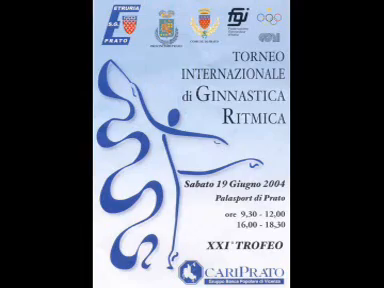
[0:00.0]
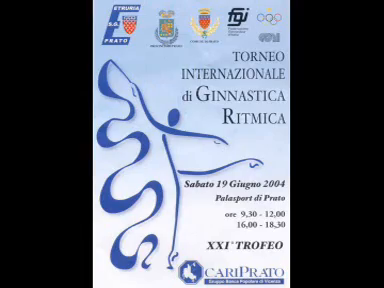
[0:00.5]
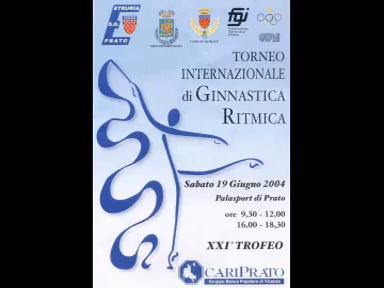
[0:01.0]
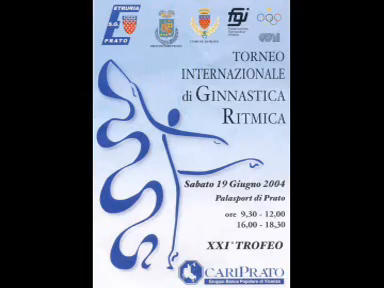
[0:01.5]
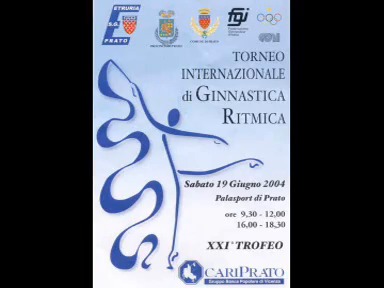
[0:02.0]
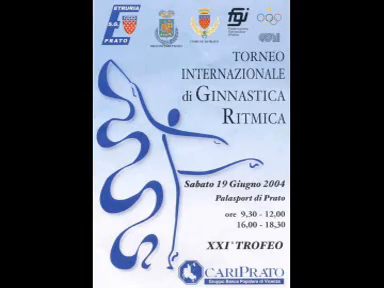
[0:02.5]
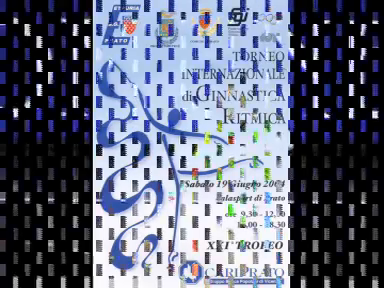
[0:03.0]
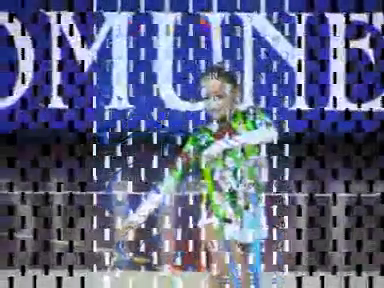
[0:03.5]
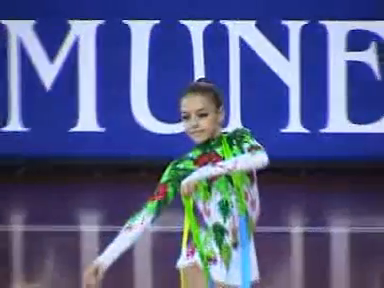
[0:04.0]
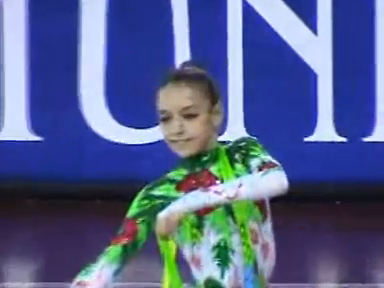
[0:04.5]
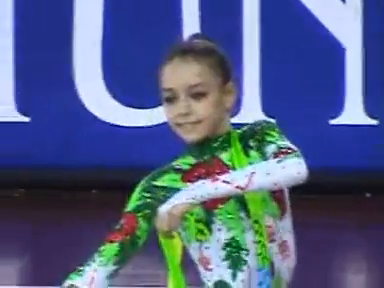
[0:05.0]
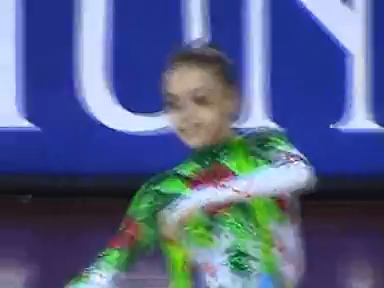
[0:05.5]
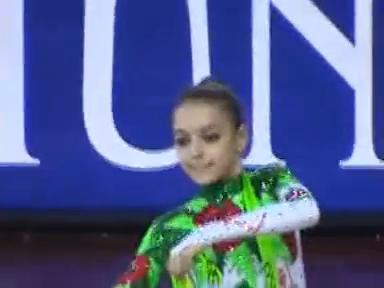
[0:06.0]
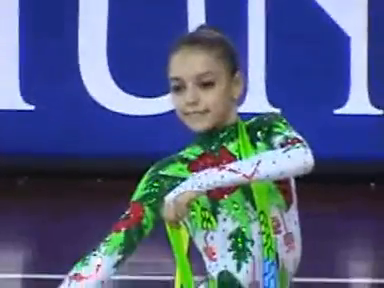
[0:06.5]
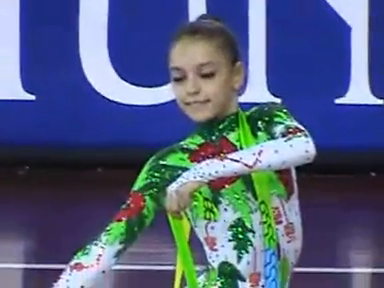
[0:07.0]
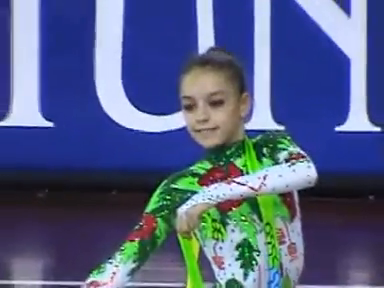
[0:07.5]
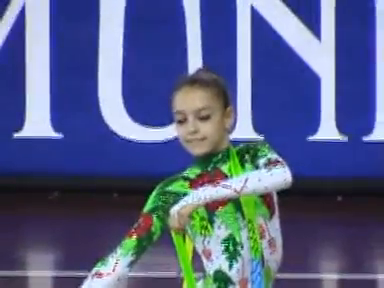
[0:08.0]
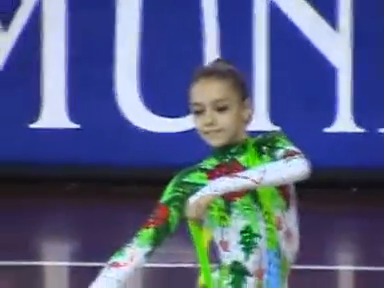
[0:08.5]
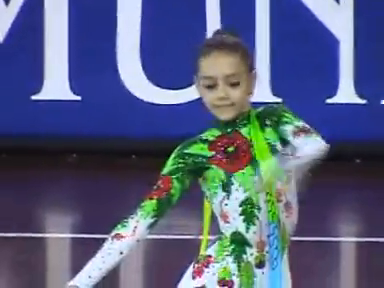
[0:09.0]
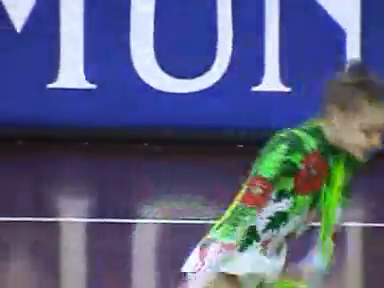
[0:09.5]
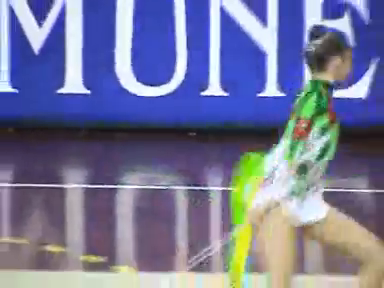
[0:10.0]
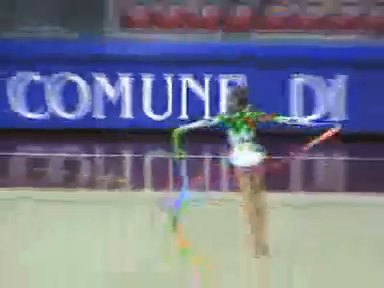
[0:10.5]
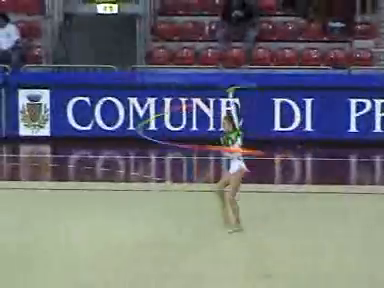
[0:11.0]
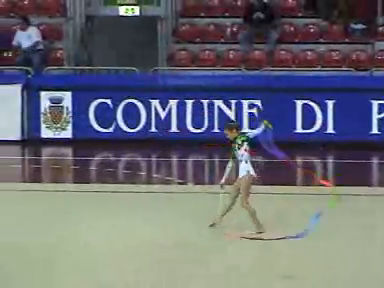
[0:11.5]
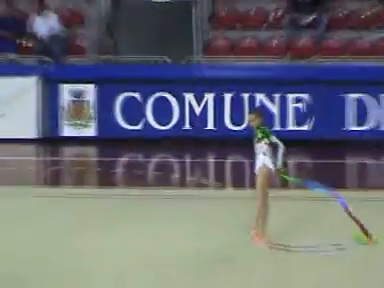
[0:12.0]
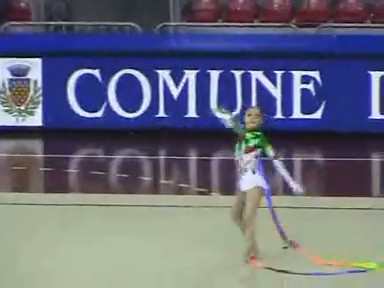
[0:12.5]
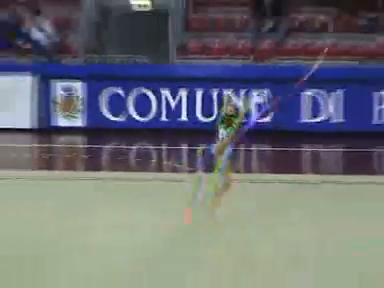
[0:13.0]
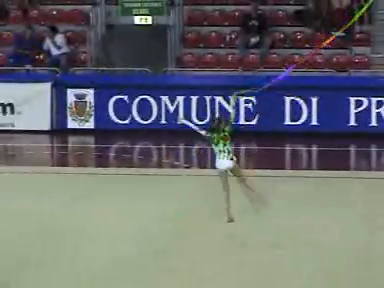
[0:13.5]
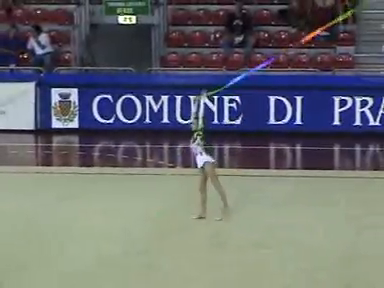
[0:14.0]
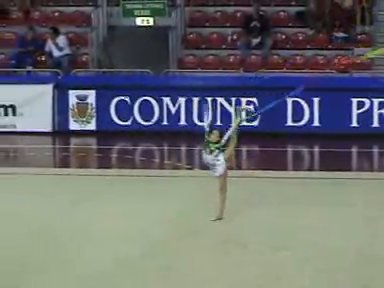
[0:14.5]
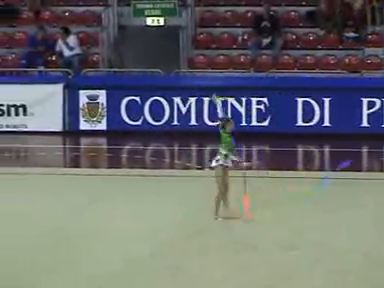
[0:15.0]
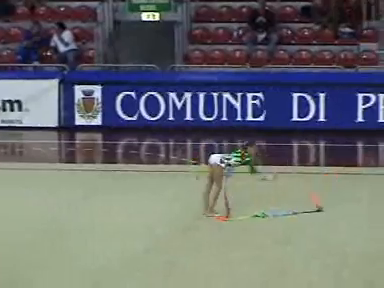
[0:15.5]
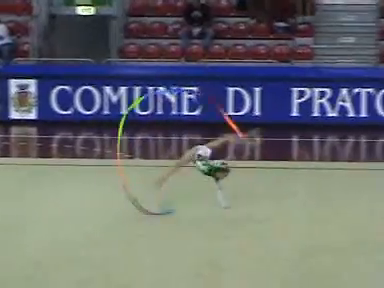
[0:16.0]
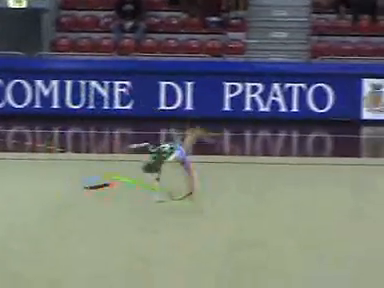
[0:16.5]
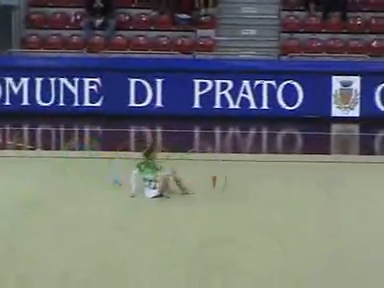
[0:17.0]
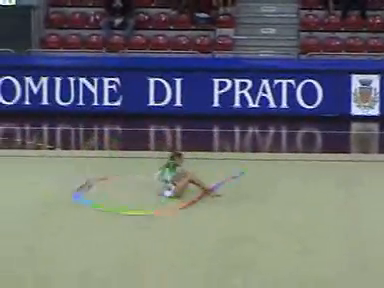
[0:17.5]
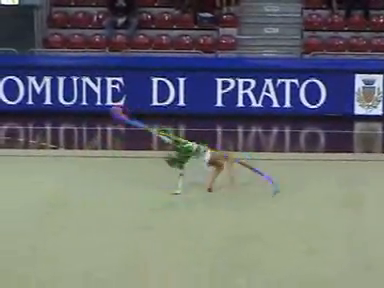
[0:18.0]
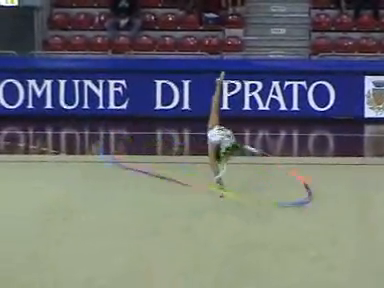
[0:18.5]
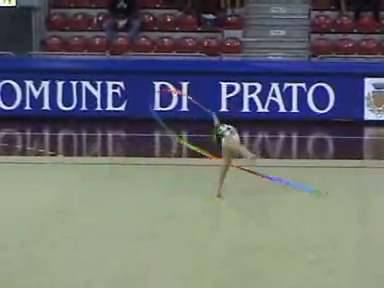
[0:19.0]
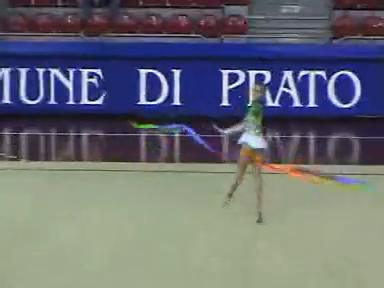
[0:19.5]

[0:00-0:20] The video appears to show a rhythmic gymnastics event held somewhere Italian-speaking. It opens with a poster featuring a stylized image of a figure holding a ribbon, with text reading "Torneo Internationale di Gymnastica Ritmica Sabato 19 G.I.U.N.G.O. Junio 2004 Palosport di Prato", hours listed as 9:30 to 12 and 16 to 18:30, and "21st Trofeo". The Olympic symbol of five interlinked rings is in the corner, apparently linking the event to the Olympics, along with other emblems, perhaps city crests, and what may be an association, Etruria Prato. Once the performance begins, a young gymnast stands still in a pose, smiling and holding a ribbon out to the side; the camera angle briefly makes her look as if she is kneeling. She then begins dancing on the floor while waving a rainbow-colored ribbon. Her tunic is very decorative, with what looks like a green floral pattern.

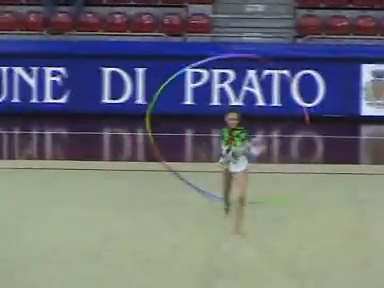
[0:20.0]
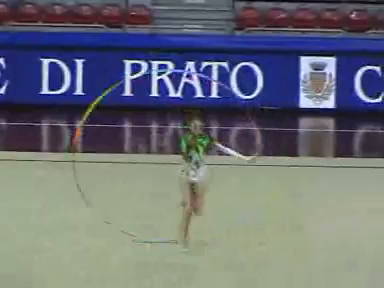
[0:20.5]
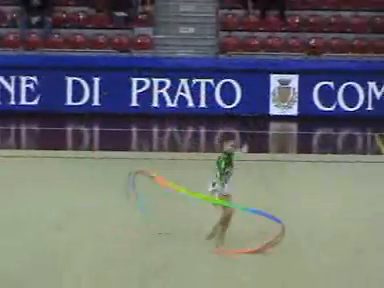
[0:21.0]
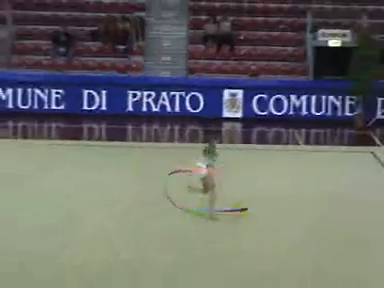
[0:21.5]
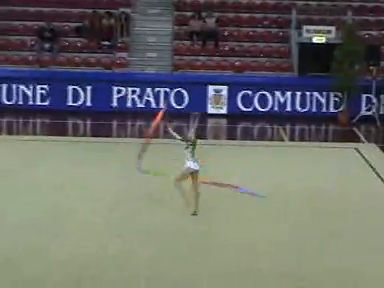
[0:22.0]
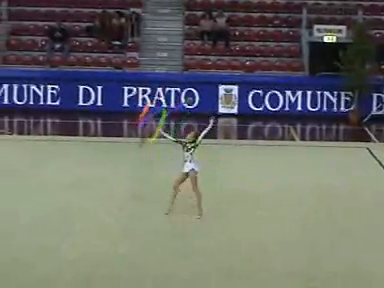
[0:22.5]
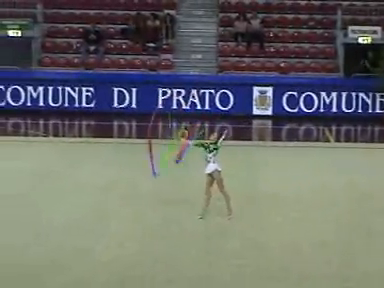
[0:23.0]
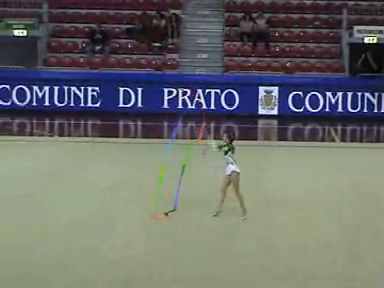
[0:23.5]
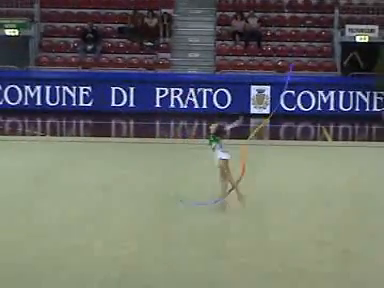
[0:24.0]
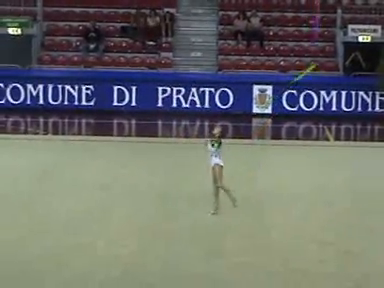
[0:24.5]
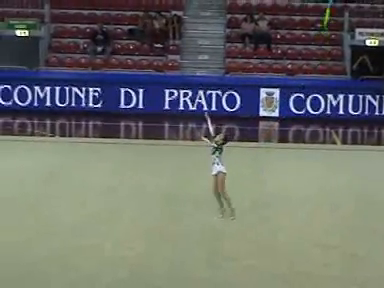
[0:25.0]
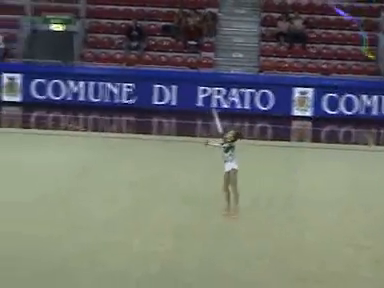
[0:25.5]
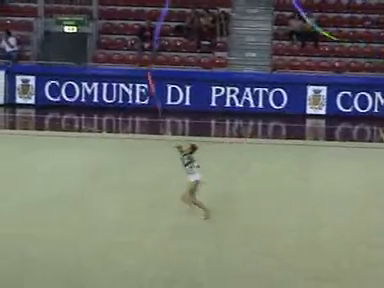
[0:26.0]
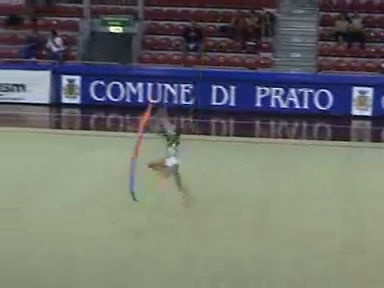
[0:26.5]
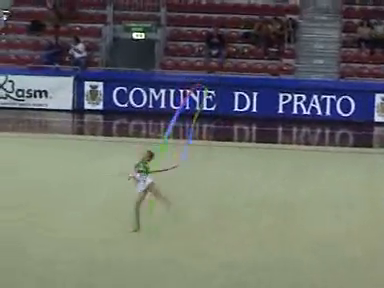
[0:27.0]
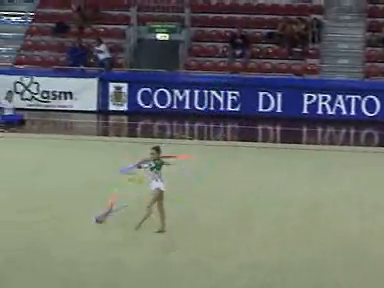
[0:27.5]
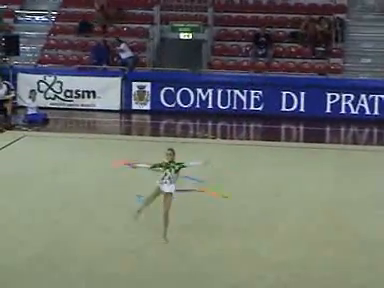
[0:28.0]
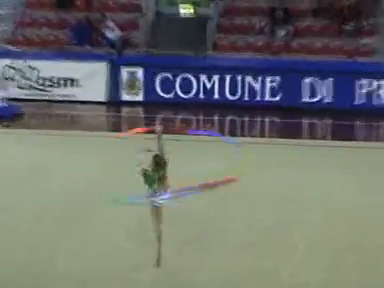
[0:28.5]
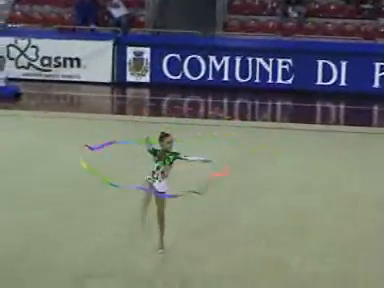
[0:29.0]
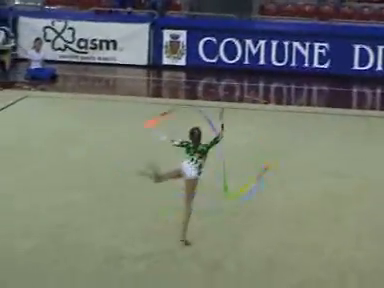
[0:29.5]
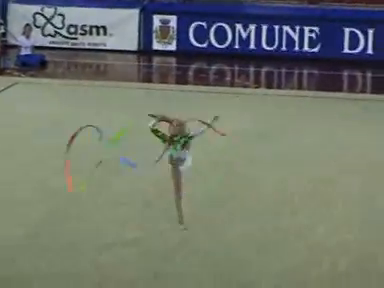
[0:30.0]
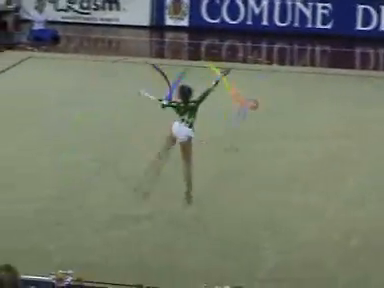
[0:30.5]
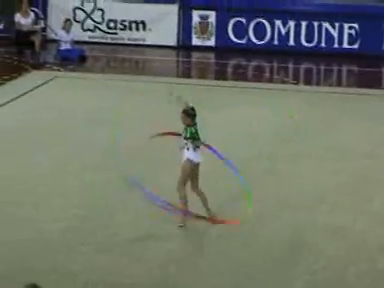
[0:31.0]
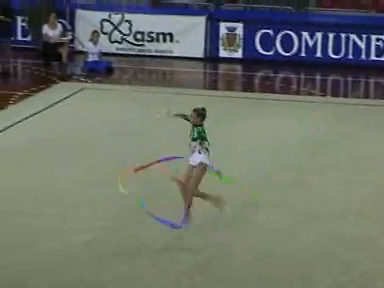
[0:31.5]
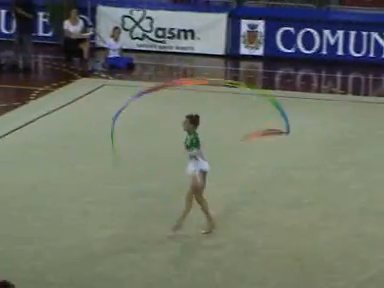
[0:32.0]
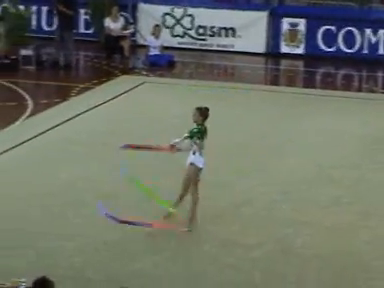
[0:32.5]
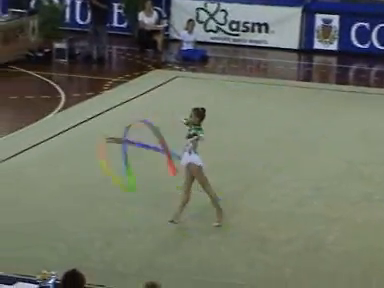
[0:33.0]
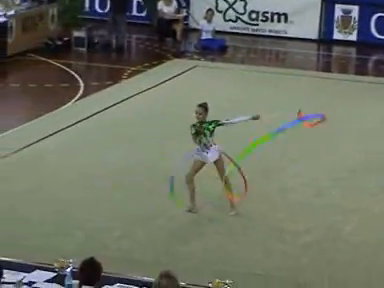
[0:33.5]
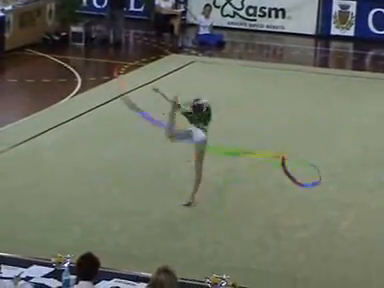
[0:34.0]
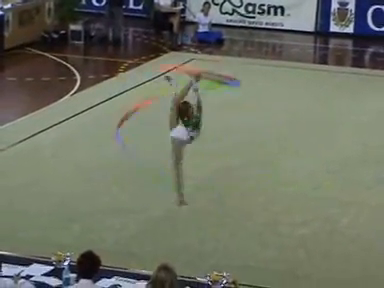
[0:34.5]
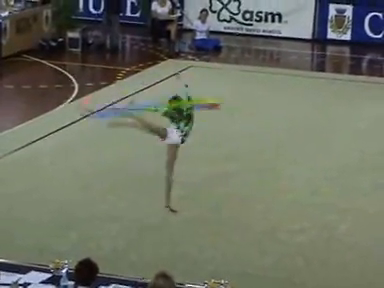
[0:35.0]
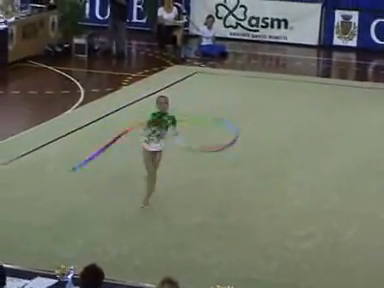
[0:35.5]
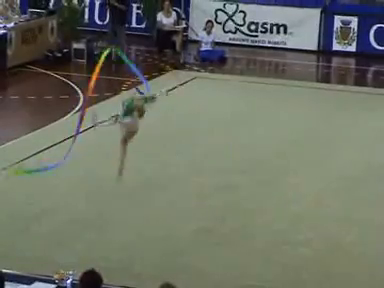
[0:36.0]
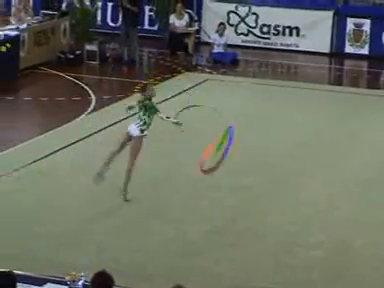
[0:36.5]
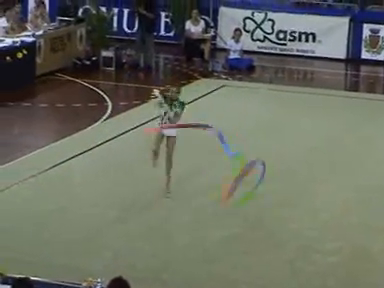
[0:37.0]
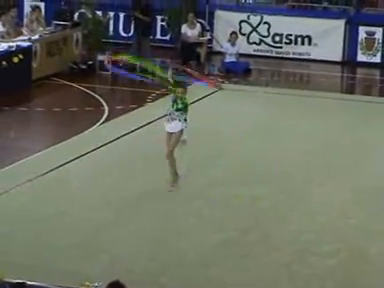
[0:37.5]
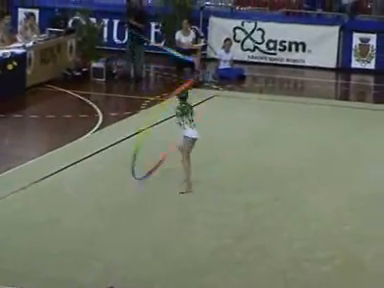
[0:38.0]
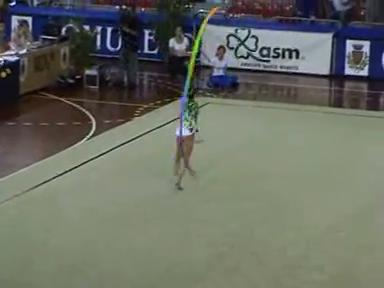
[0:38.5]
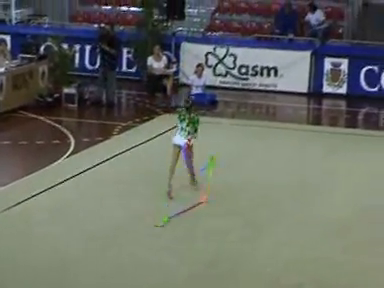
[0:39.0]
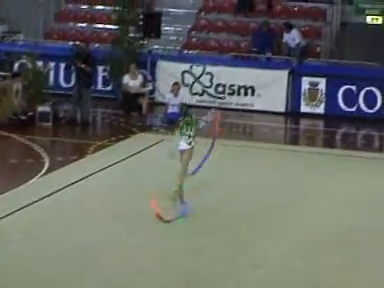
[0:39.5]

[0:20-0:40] The young gymnast hops, leaps and swirls the multicolored ribbon. At one point she throws it into the air and catches it, moving around the floor while a few onlookers watch. A few people sit in the stands of the arena, a few more sit at the corner of the mat, and in the foreground a couple of seated people, perhaps judges, are barely visible closer to the camera. The camera is held fairly still. Behind the girl, a wall dividing the arena floor from the seating area carries white text on a blue background: "COMUNEDIPRATO". She dances on what appears to be a beige rug or mat, and the arena floor beneath it appears brown or maroon, sort of matching the seating, which also appears dark red or maroon.